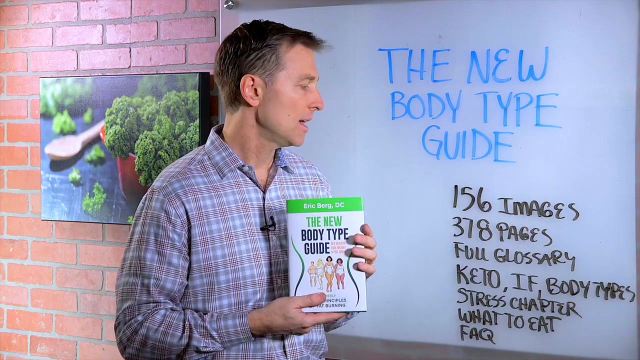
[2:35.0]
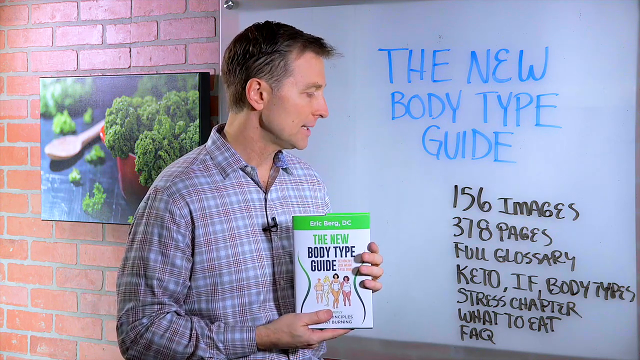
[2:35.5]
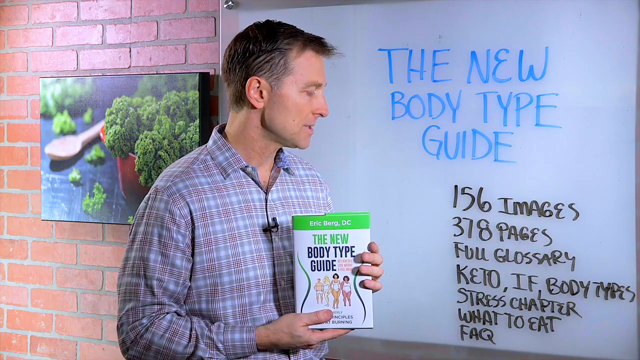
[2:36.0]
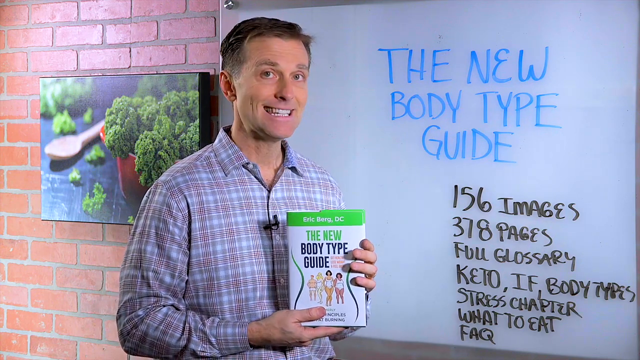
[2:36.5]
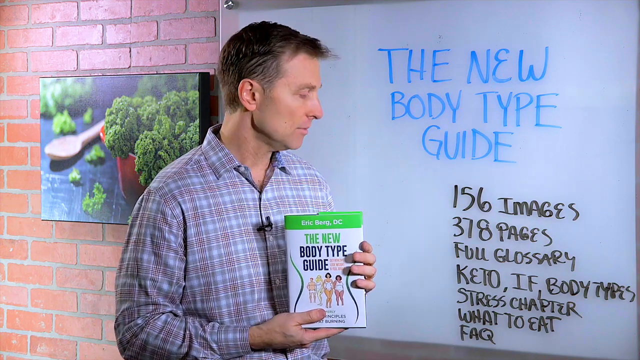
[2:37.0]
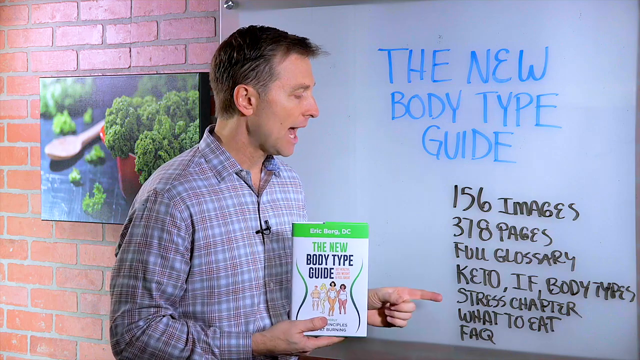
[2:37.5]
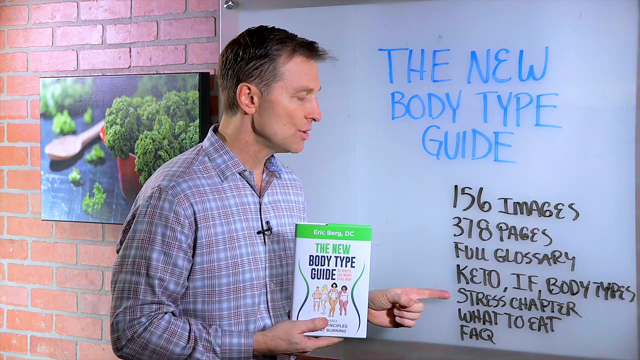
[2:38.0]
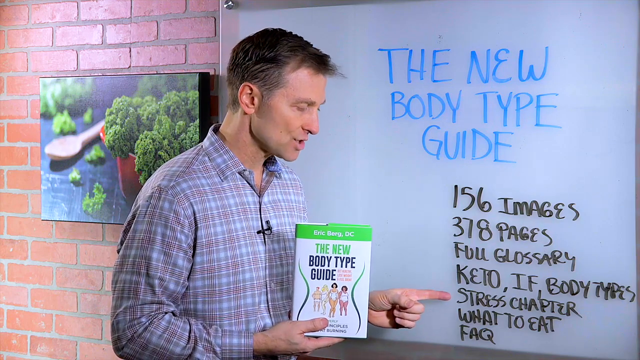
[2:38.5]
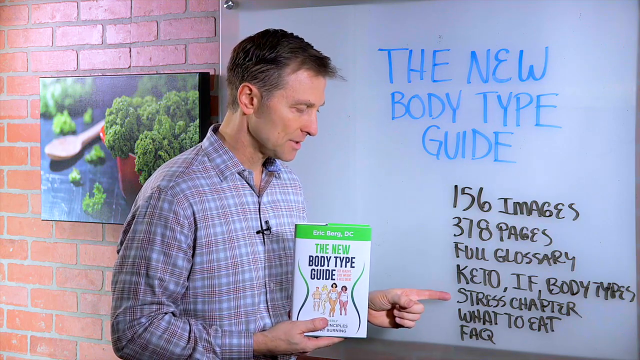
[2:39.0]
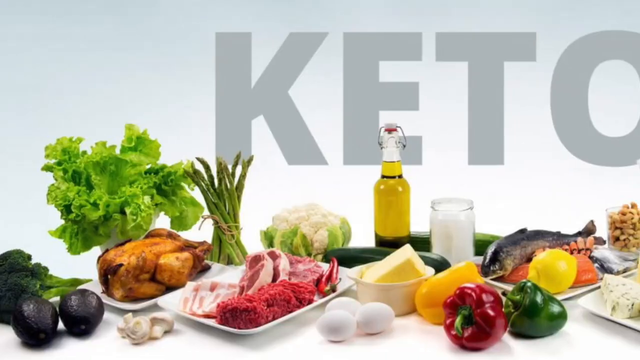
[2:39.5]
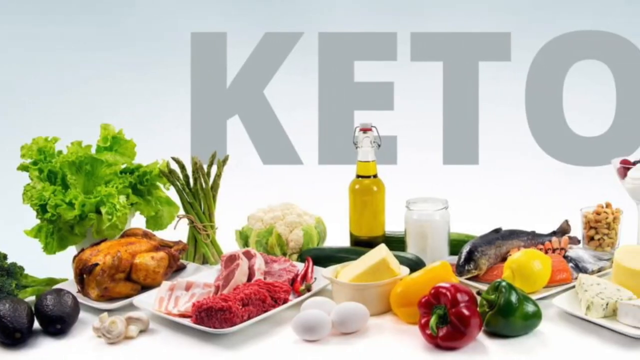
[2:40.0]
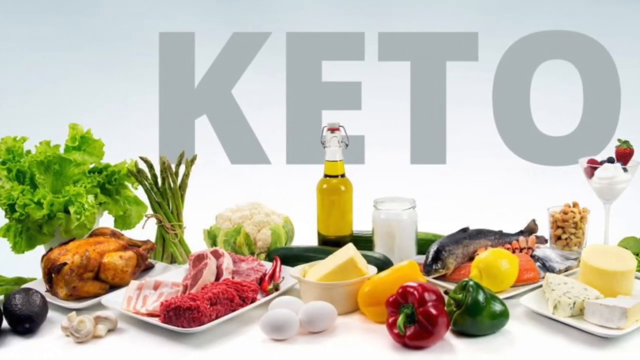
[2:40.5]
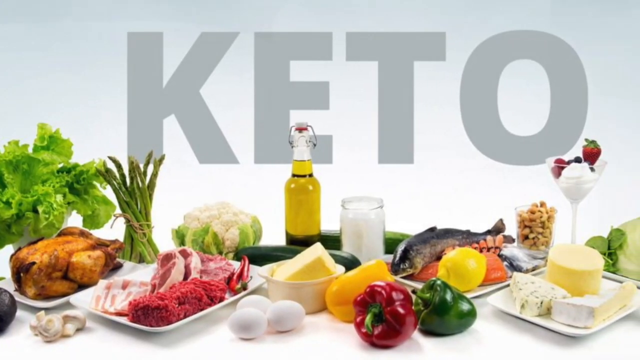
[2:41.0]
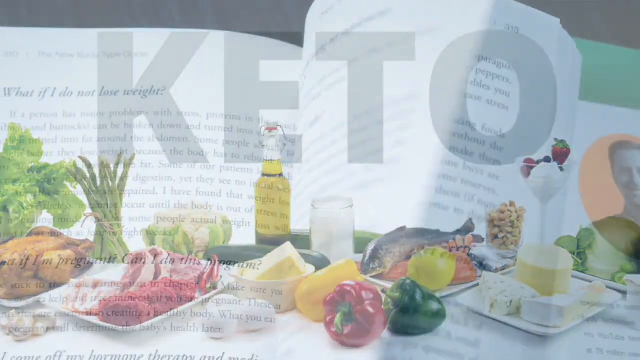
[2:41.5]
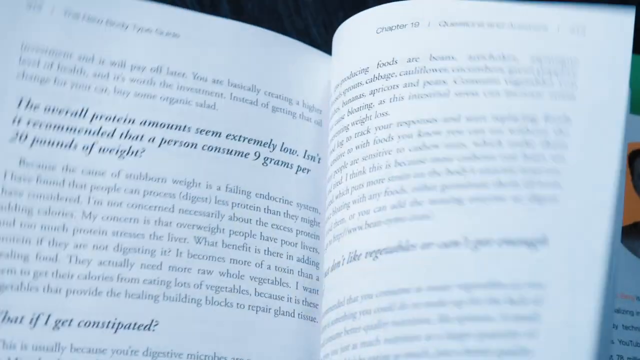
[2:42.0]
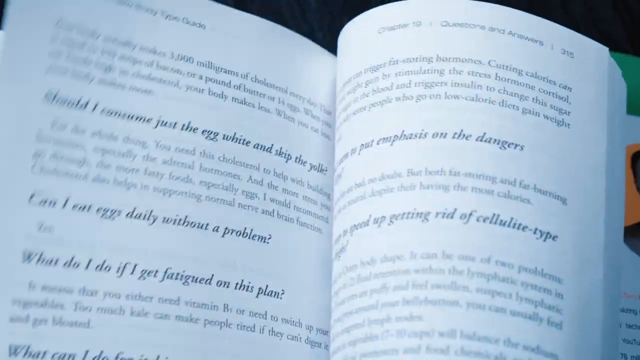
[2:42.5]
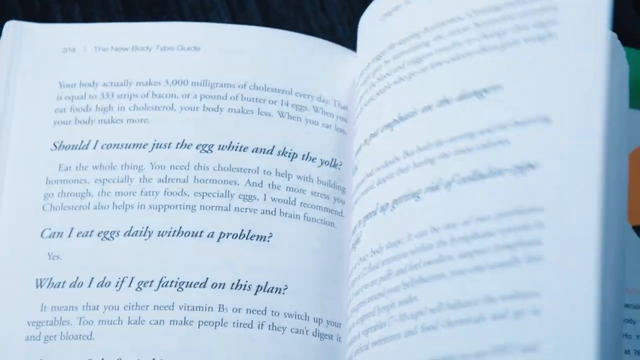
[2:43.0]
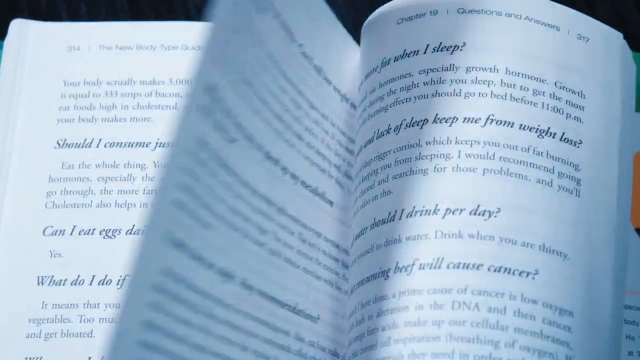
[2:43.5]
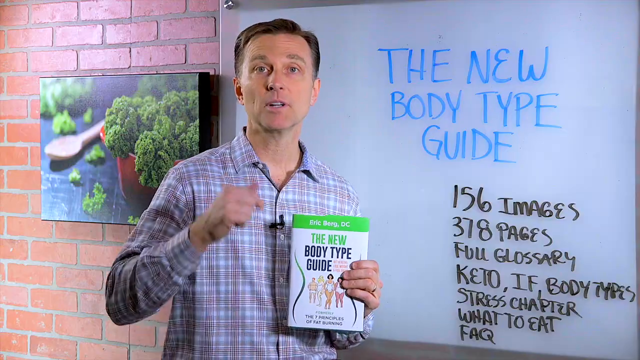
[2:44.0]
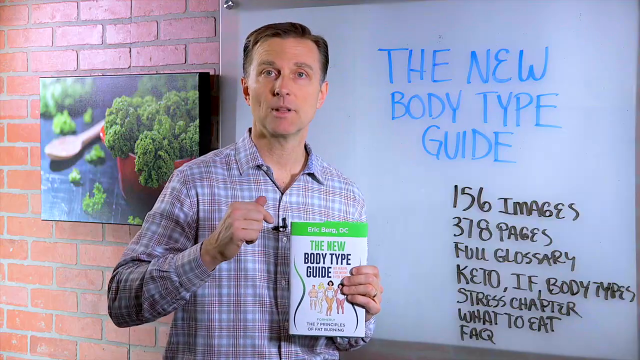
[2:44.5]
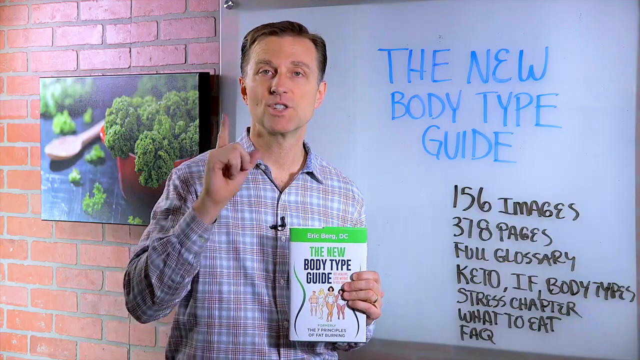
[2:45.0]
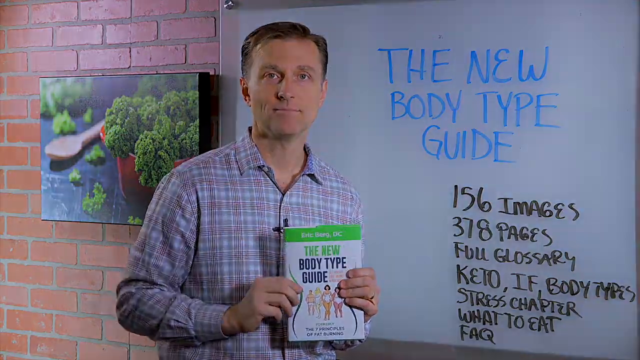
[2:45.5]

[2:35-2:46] The man points at "stress chapter" while holding the book in his left hand and pointing at it with his right. Pages of the book turn, showing pictures of food under "keto": olive oil, chicken, asparagus on a table, avocados, red and green peppers, eggs, fish, lemon, juice, lettuce, cucumber and cauliflower, along with "per day." The man looks at the camera and at the whiteboard, which shows "what to eat," "FAQ" and "156 images." He points at "stress" and at the whiteboard as he talks to the camera.